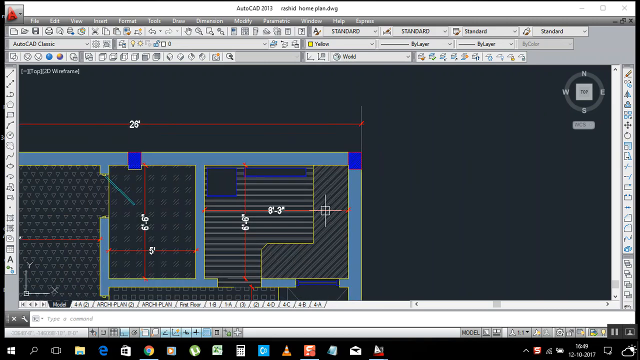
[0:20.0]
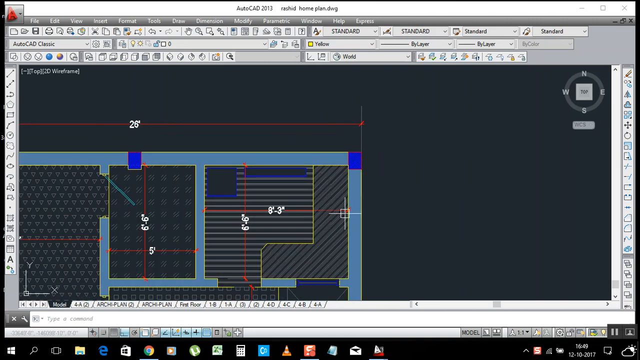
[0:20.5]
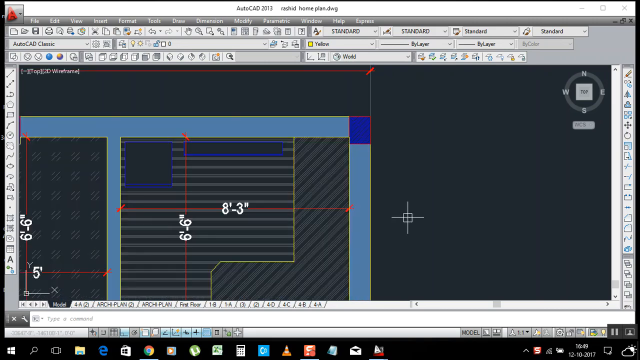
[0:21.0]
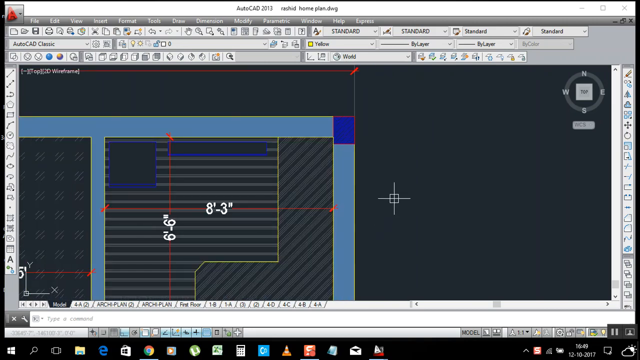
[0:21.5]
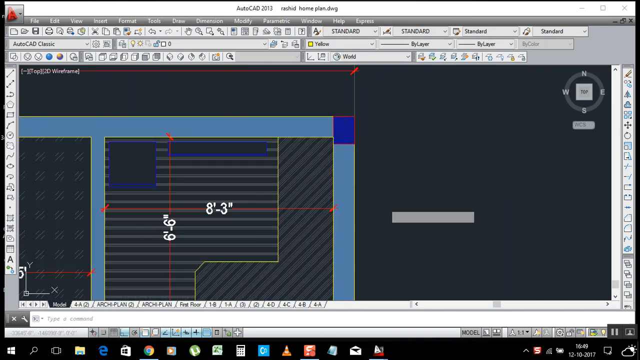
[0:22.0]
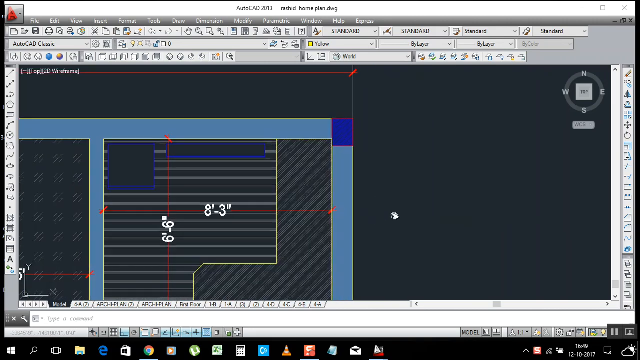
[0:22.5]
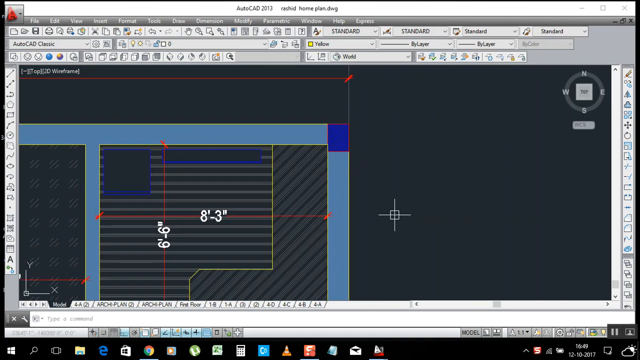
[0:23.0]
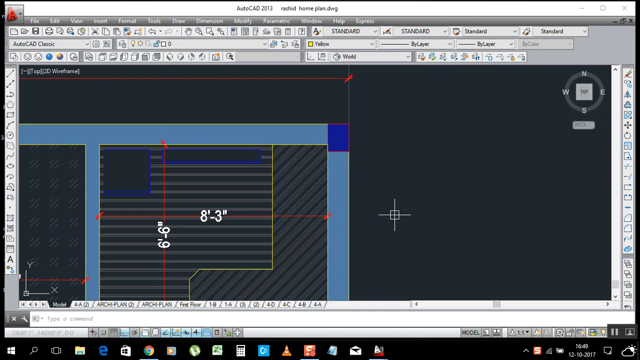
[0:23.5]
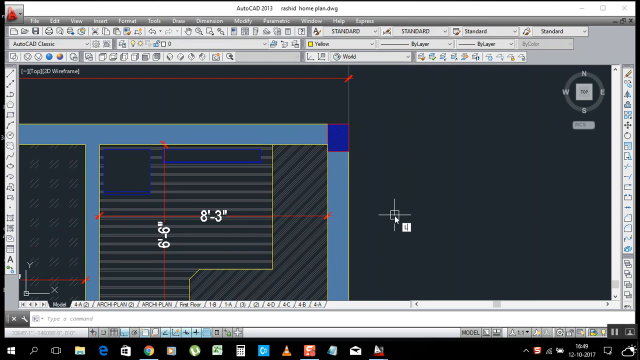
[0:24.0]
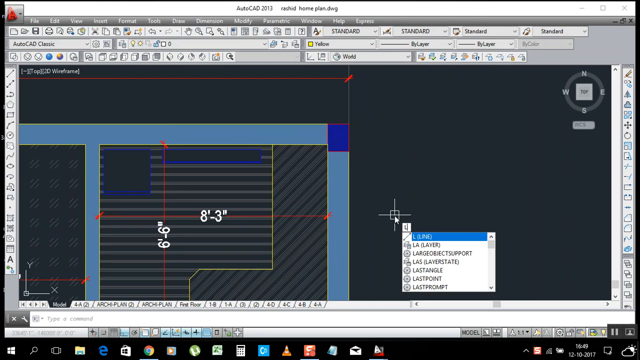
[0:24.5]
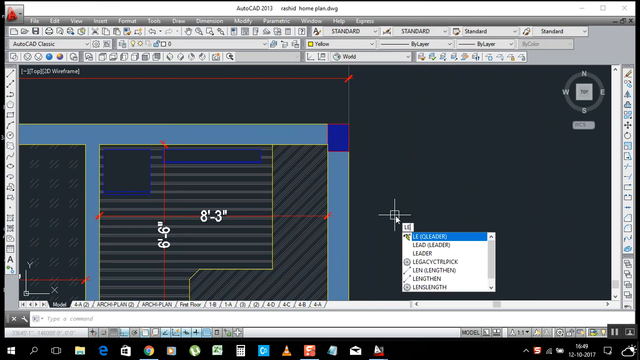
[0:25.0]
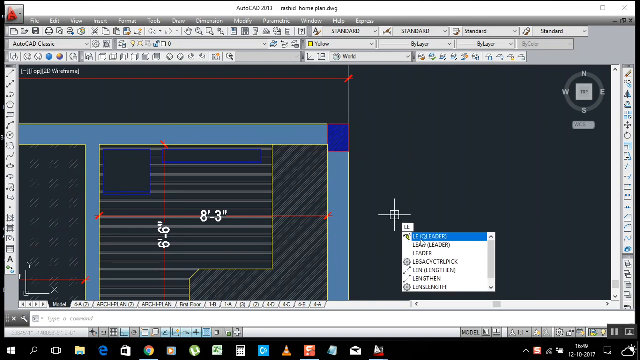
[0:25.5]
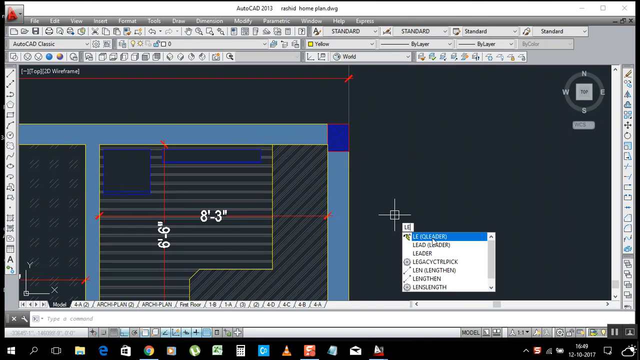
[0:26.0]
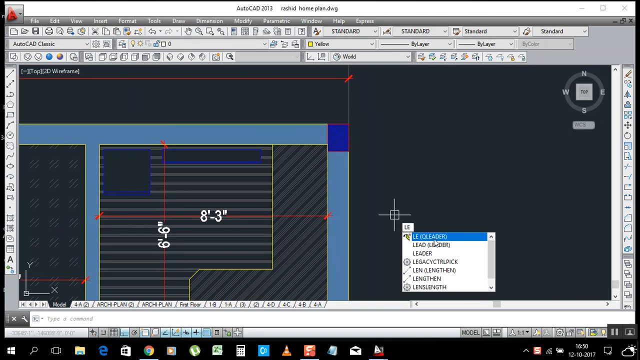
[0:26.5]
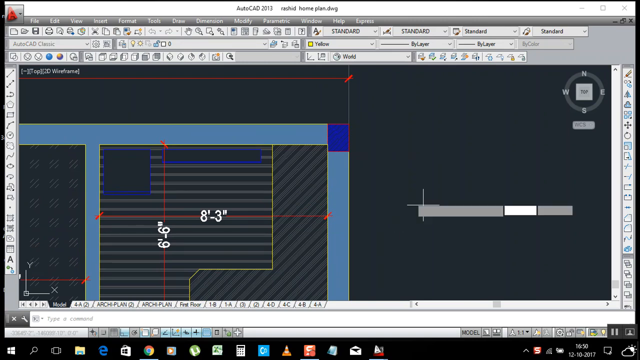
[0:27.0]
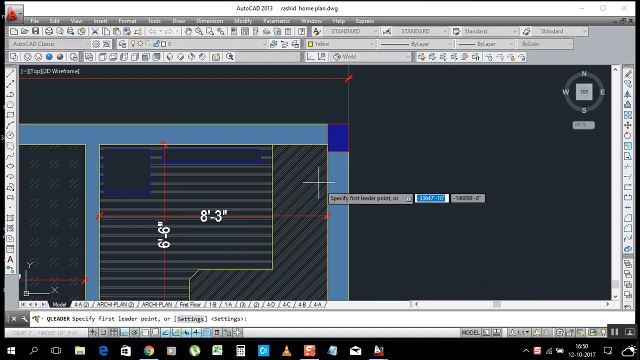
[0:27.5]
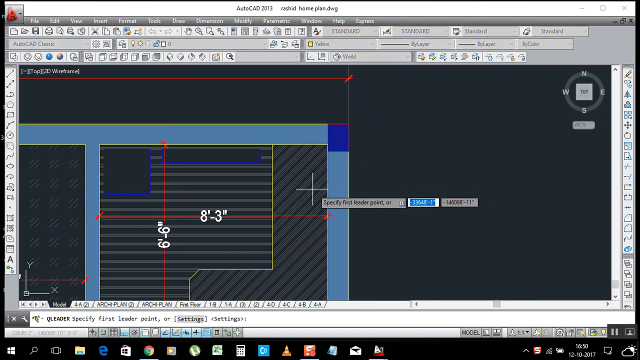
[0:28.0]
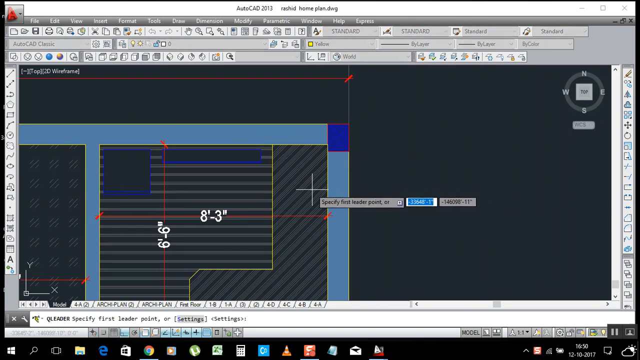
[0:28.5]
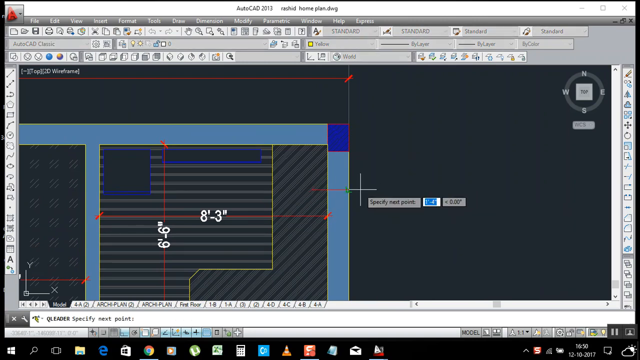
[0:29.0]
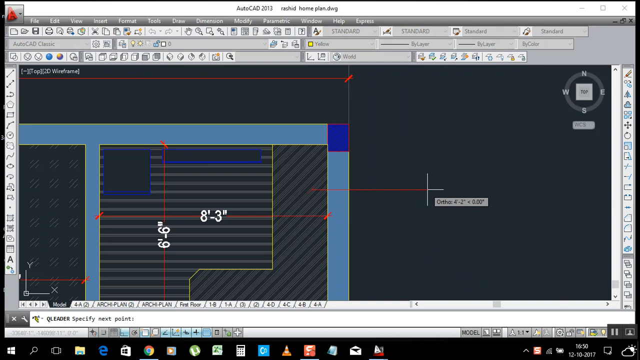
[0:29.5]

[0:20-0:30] The cursor continues to move the diagram around. A click pulls up a menu, and the pointer mouses over one of the items and selects it. The cursor then says "specify first leader point", and a horizontal red line is drawn across the screen. On the diagram, a room has its width and height labeled as five feet by six feet six inches, and a doorway leads into that room. The entire space is 26 feet wide, marked by a red horizontal line across the top of the diagram with a white label that says "26 feet".